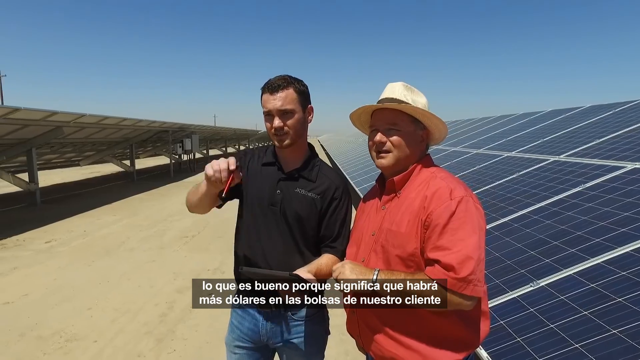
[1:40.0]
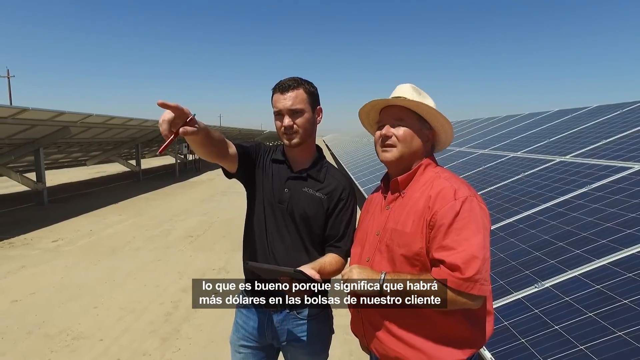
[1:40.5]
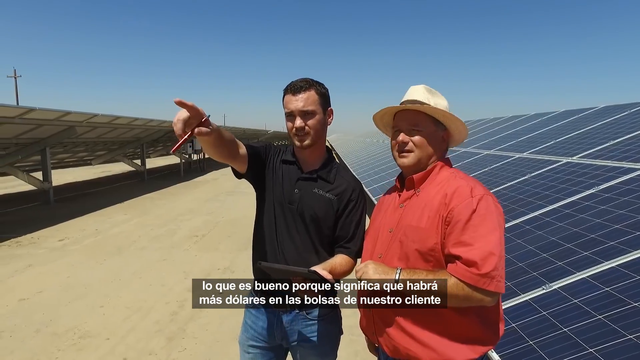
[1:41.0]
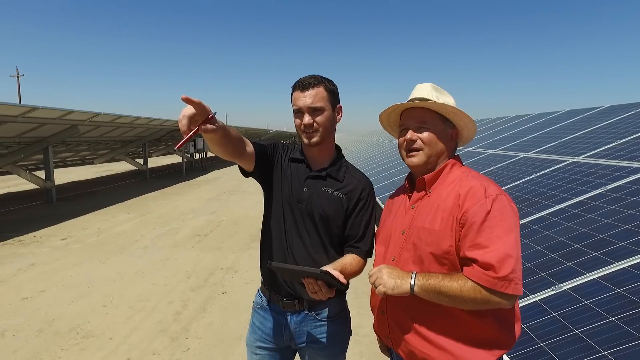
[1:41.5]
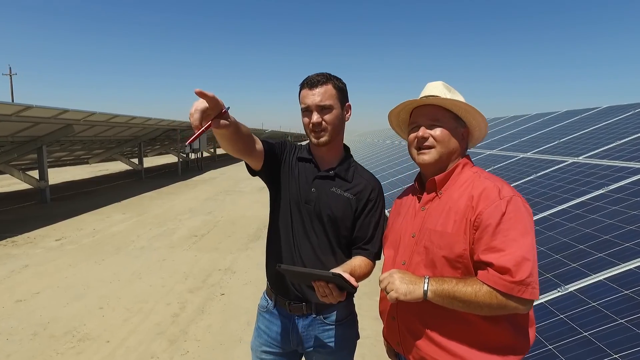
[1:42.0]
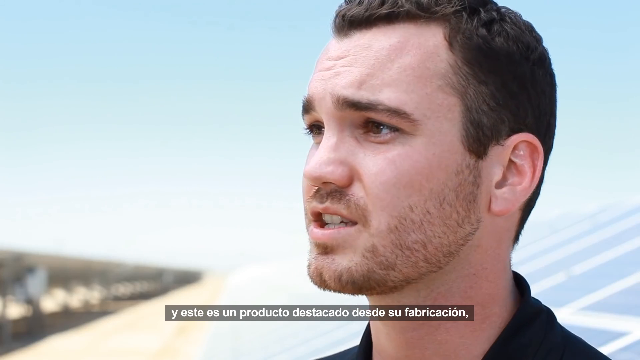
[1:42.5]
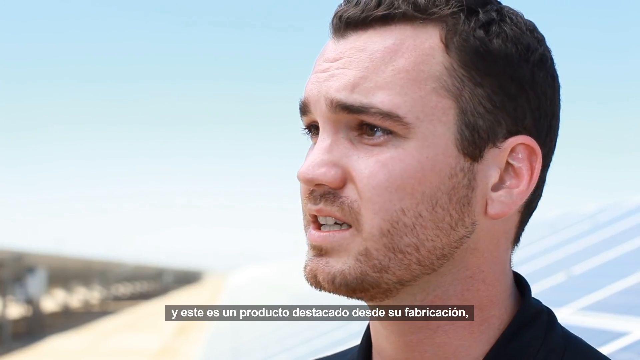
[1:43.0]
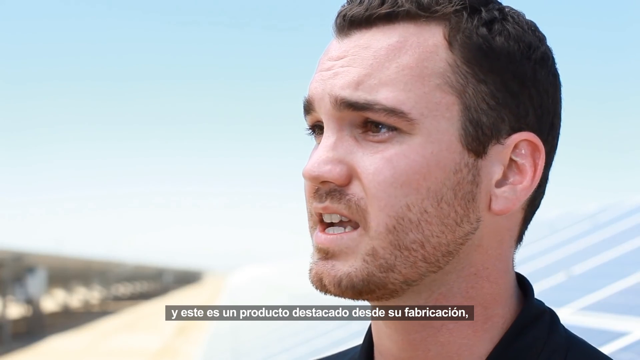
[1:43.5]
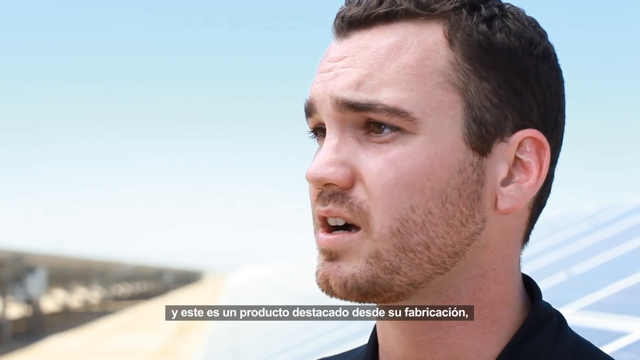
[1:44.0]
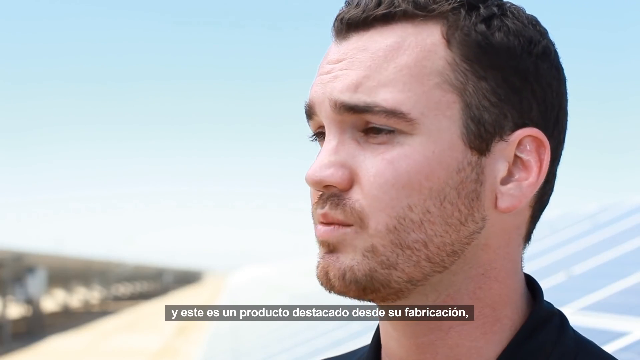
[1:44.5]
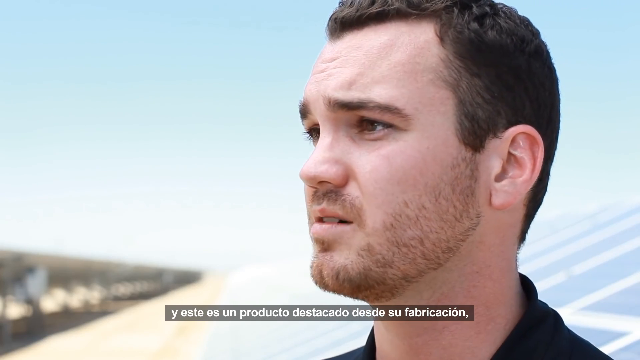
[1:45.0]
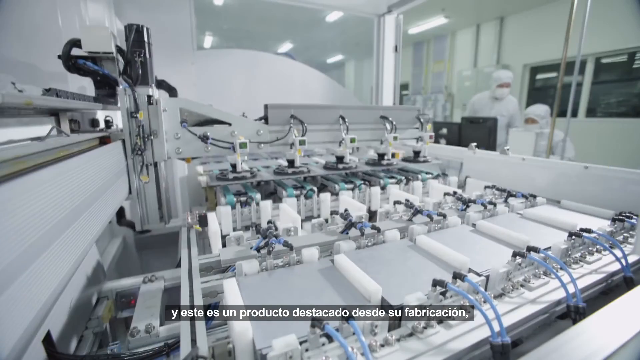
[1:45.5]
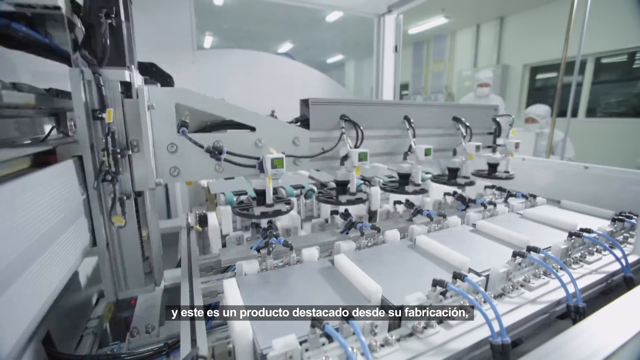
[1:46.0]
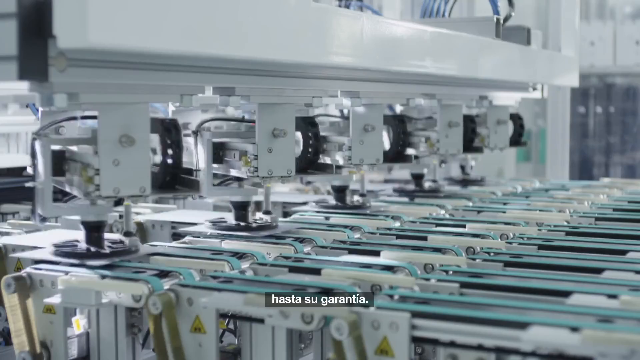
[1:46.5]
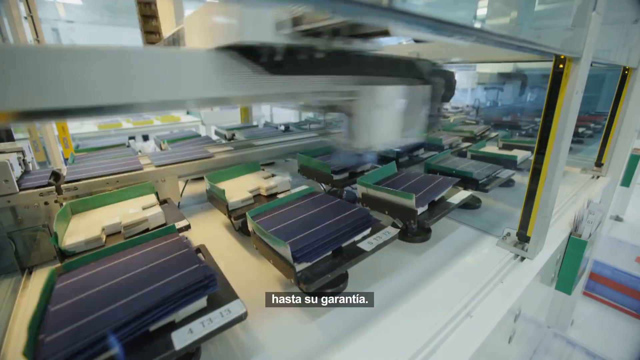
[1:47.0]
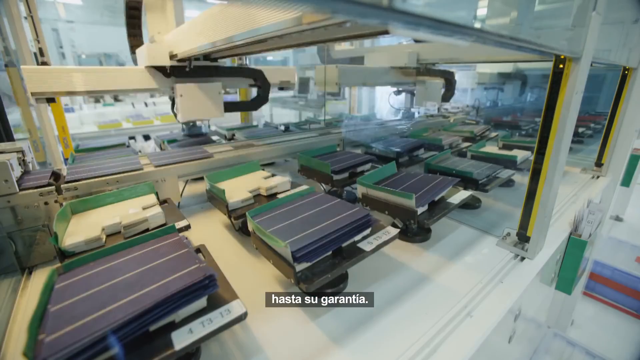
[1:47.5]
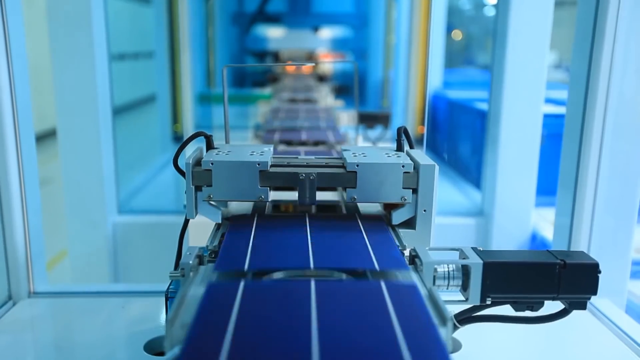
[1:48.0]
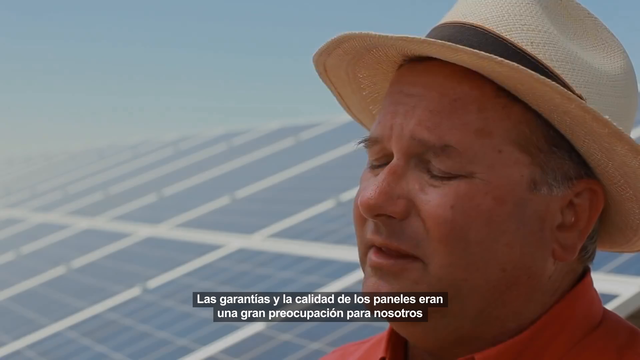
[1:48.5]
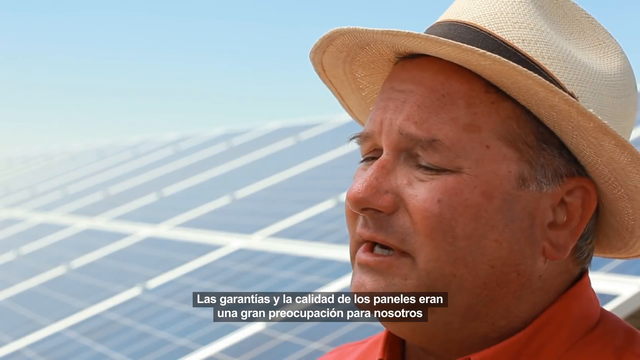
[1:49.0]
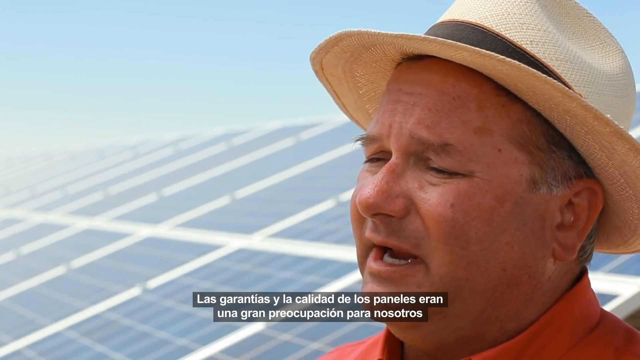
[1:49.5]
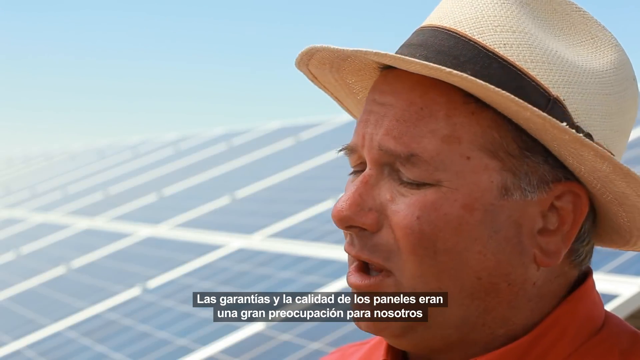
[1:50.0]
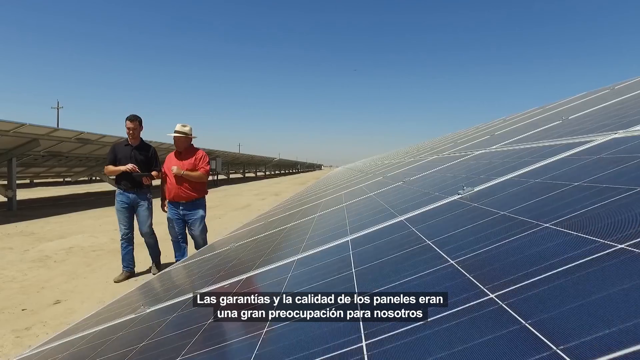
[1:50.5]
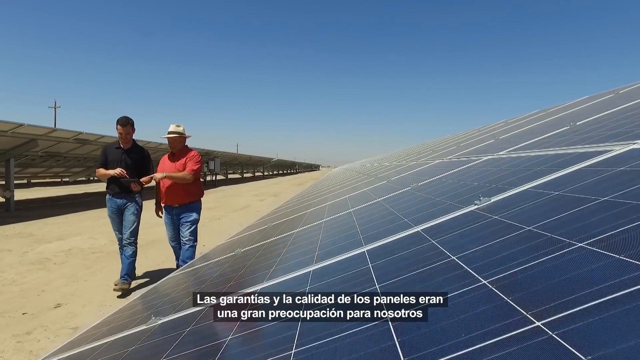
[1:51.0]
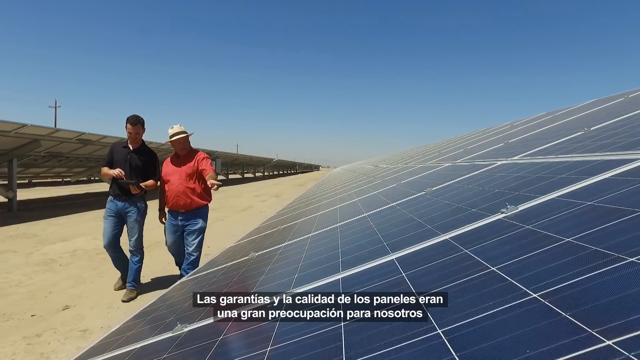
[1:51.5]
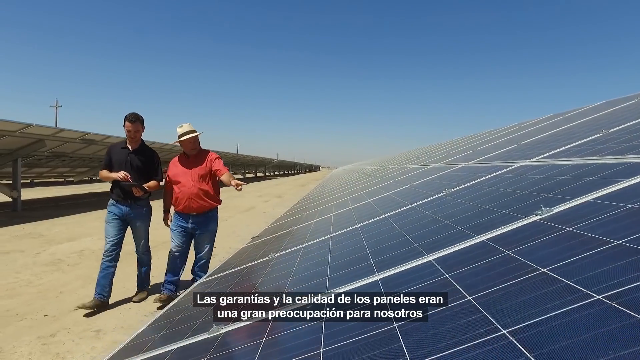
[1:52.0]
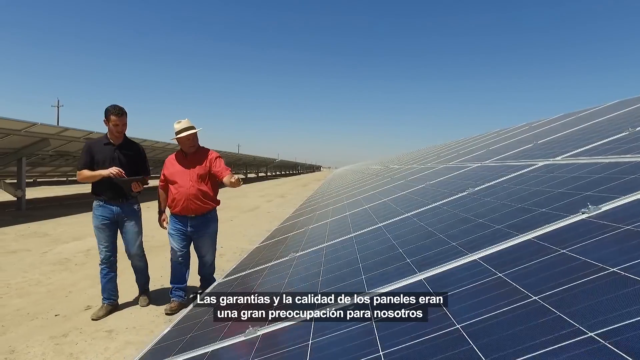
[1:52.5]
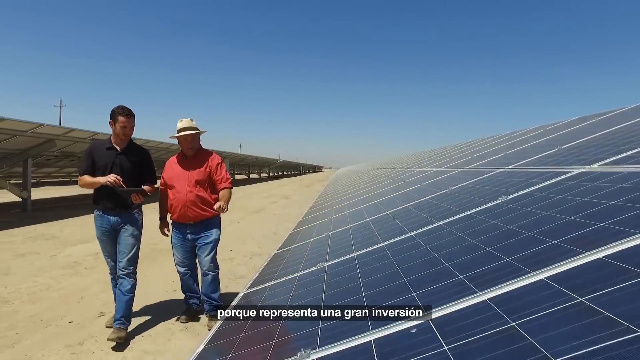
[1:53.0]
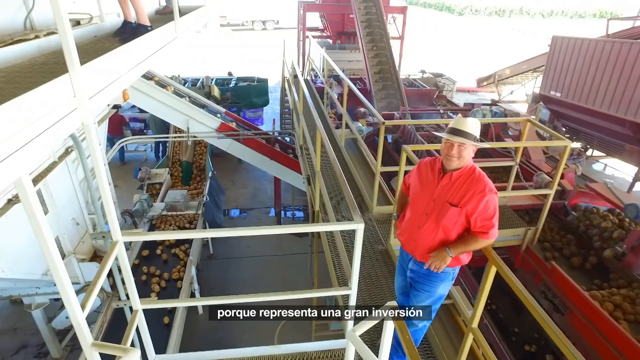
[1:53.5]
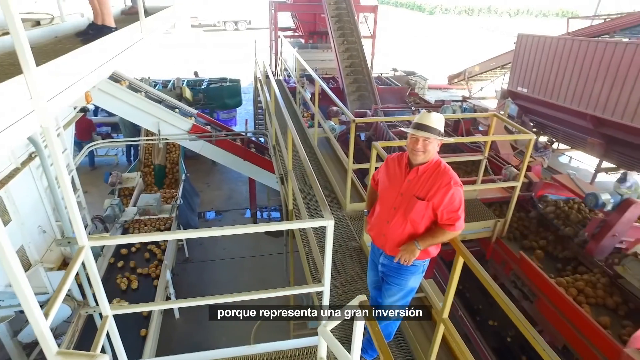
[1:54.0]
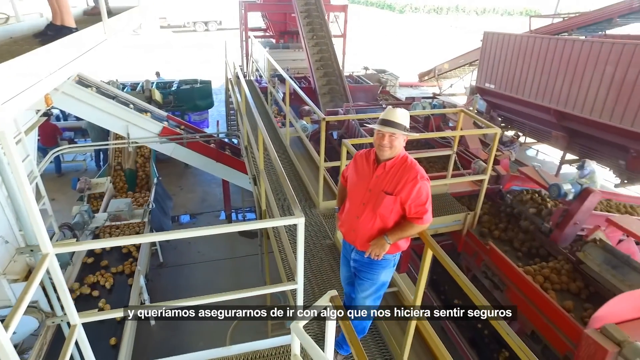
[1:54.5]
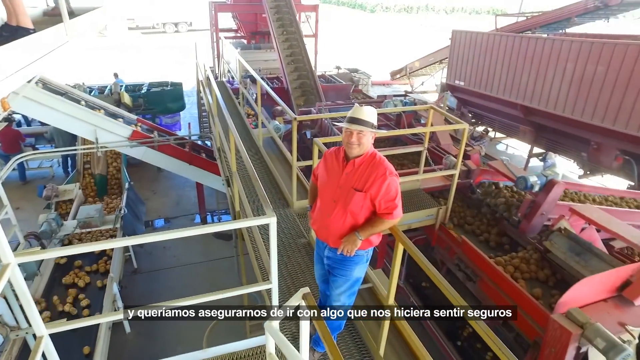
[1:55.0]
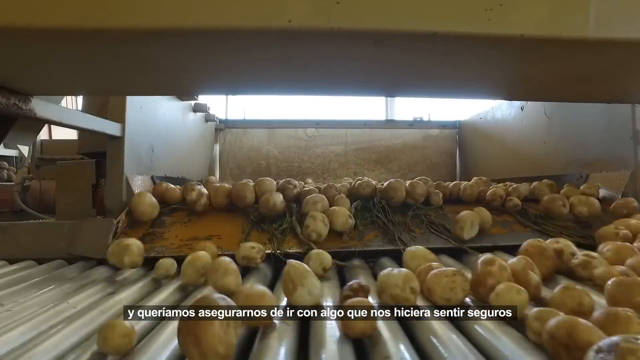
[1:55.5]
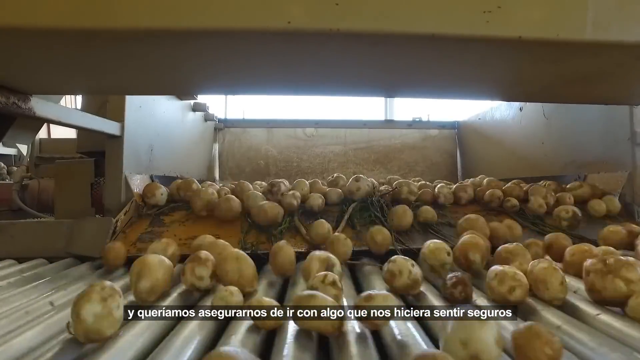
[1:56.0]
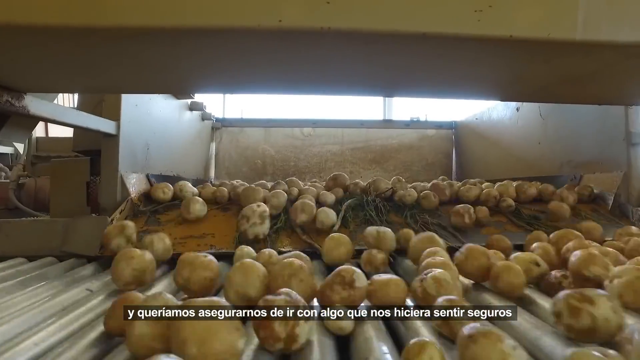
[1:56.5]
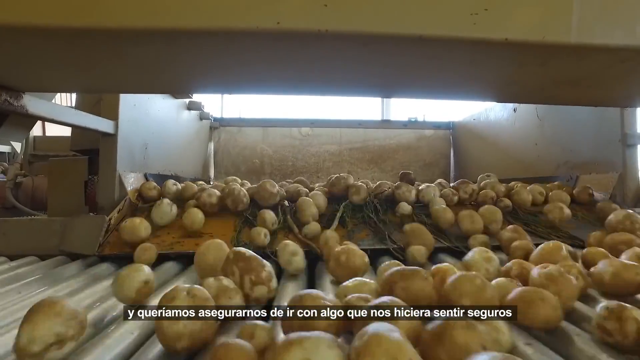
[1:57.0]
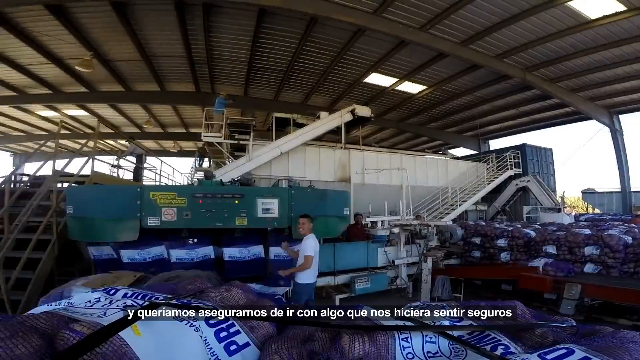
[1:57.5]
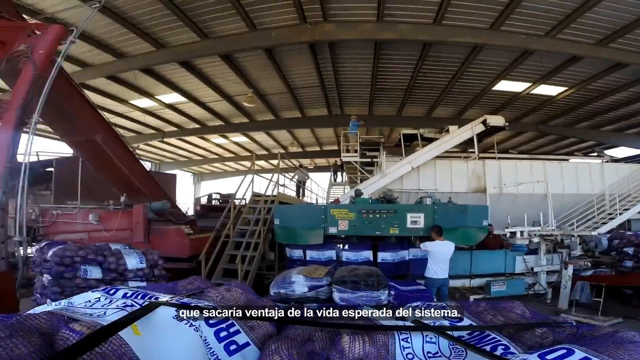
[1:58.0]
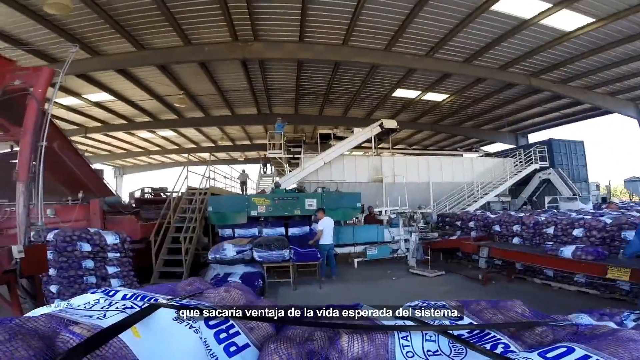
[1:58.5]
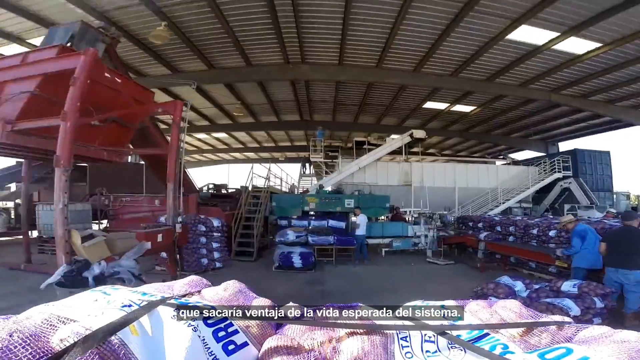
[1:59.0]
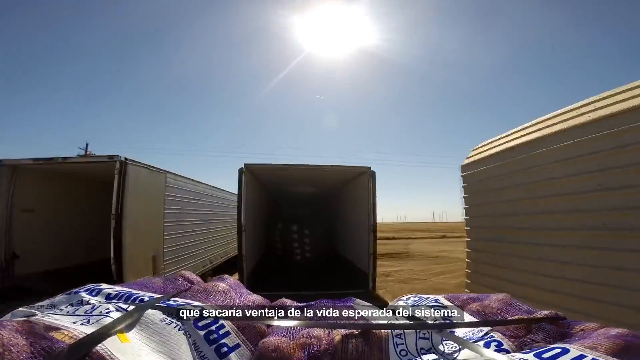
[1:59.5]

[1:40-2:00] The person in the black polo with dark brown hair stands on the left next to someone in a white hat and an orange dress shirt. Both stand in a field of solar panels; the man in the black polo holds a pen in his right hand and points away from the screen as they both look in the direction he points. The video cuts to the man in the black polo talking to the camera, with the camera close to his face and solar panels visible in the background. Next, many machines are shown doing work, installing things and making changes to certain gadgets. The video cuts to the man in the white hat speaking and being interviewed, the camera close to his face, with solar panels behind him. Another angle then shows the two men walking across and looking at the solar panels.